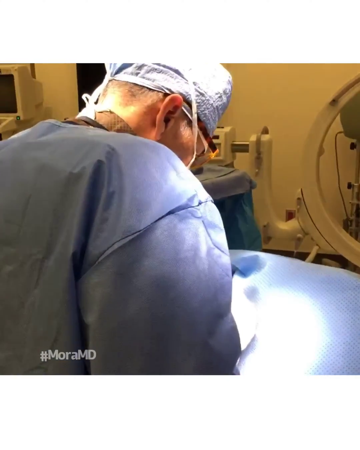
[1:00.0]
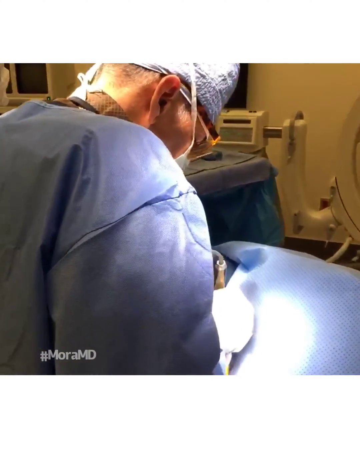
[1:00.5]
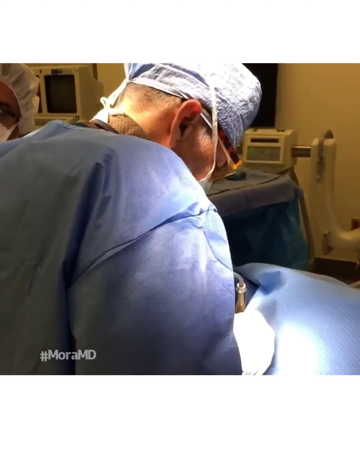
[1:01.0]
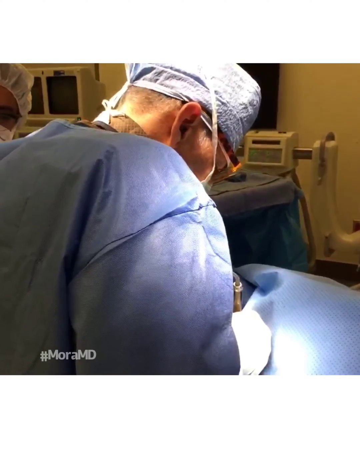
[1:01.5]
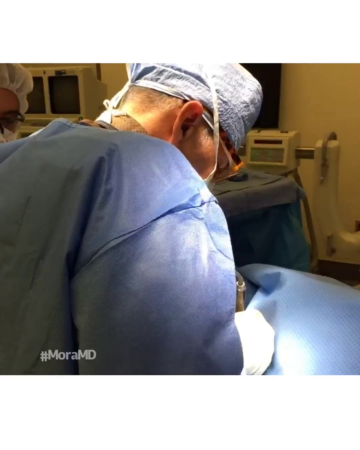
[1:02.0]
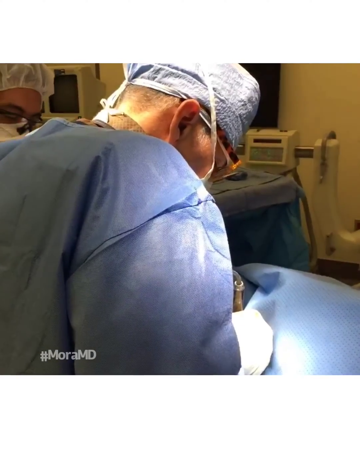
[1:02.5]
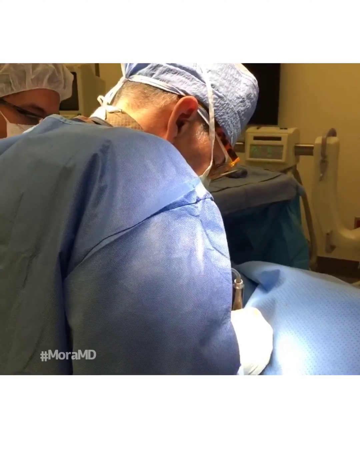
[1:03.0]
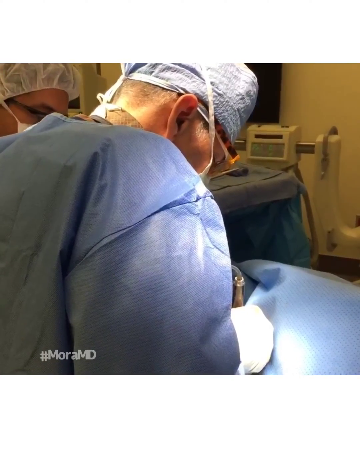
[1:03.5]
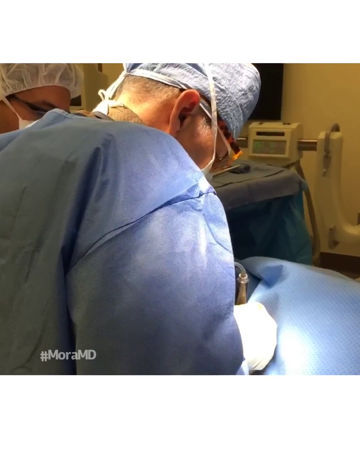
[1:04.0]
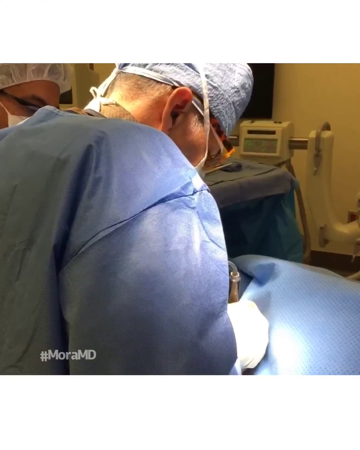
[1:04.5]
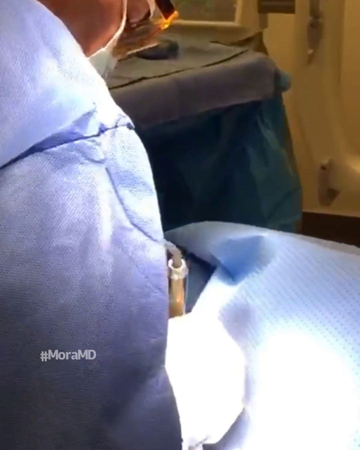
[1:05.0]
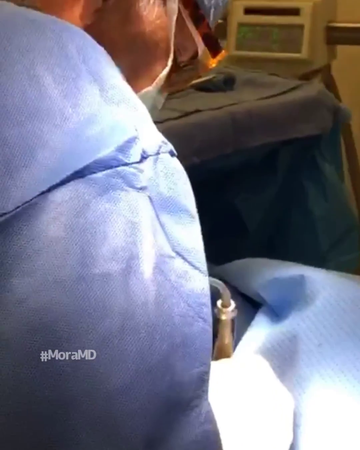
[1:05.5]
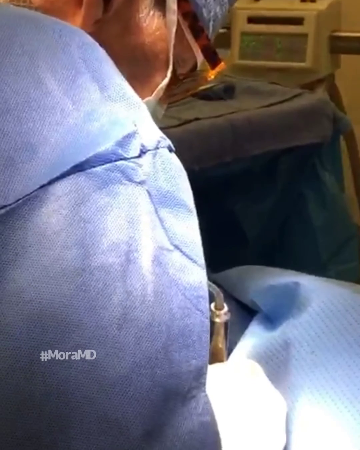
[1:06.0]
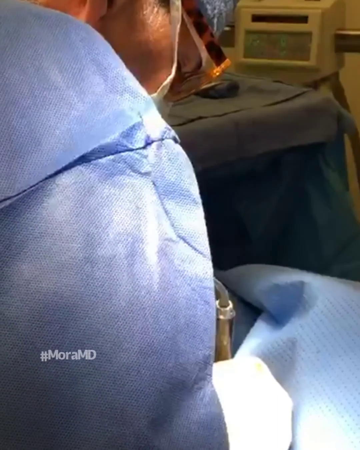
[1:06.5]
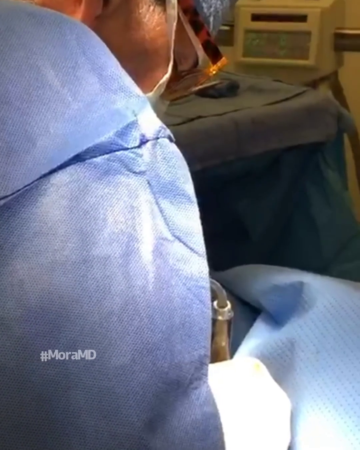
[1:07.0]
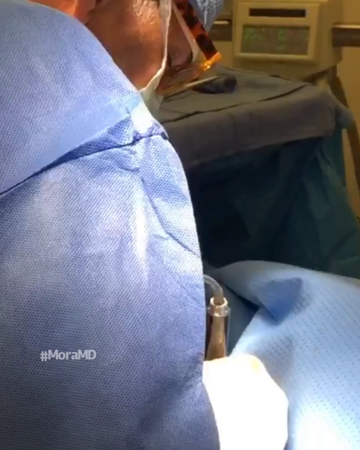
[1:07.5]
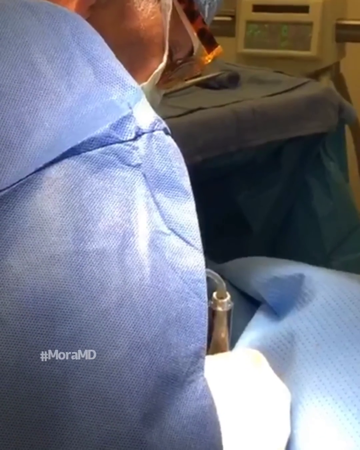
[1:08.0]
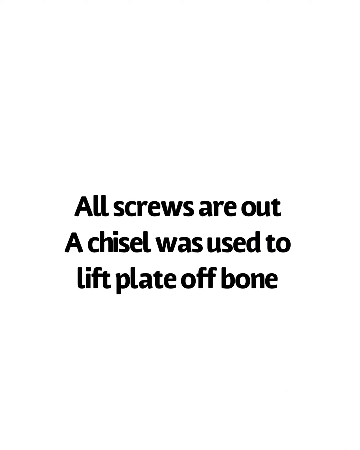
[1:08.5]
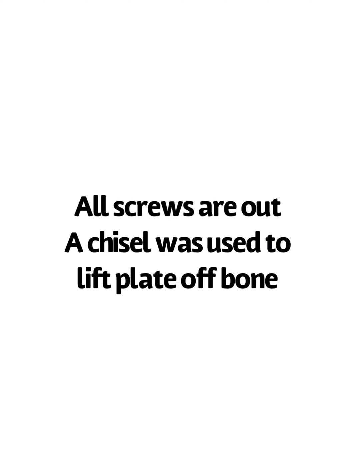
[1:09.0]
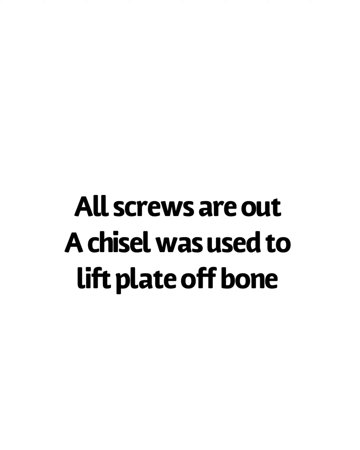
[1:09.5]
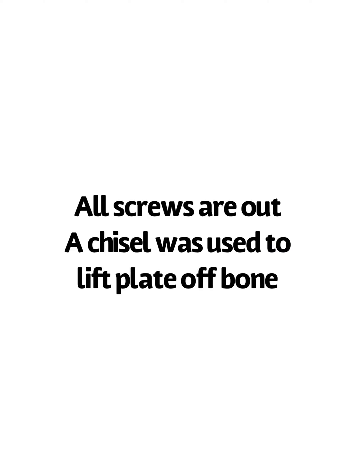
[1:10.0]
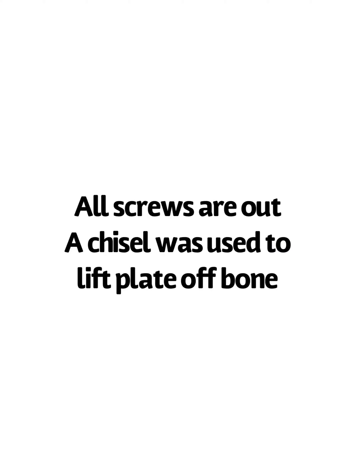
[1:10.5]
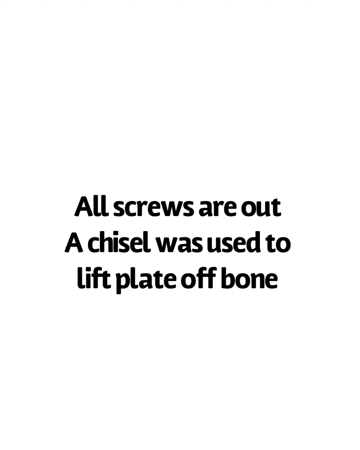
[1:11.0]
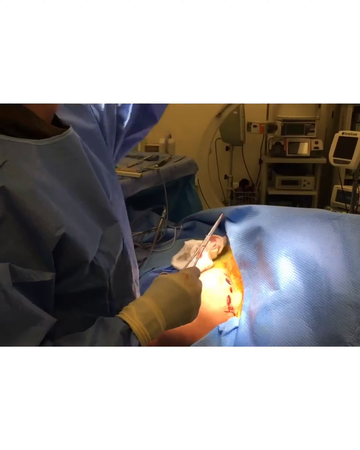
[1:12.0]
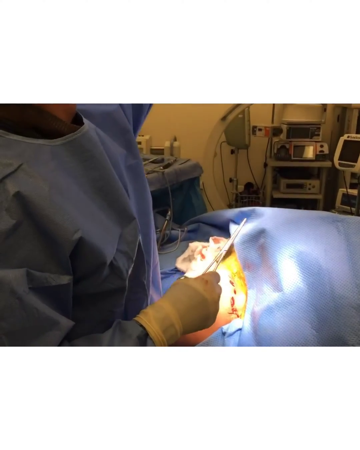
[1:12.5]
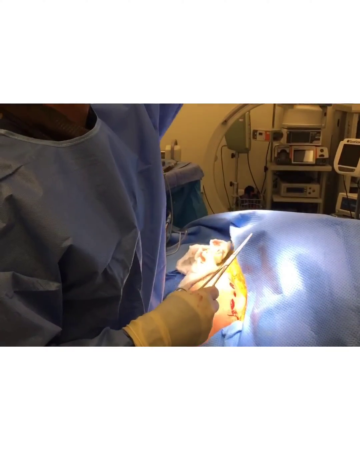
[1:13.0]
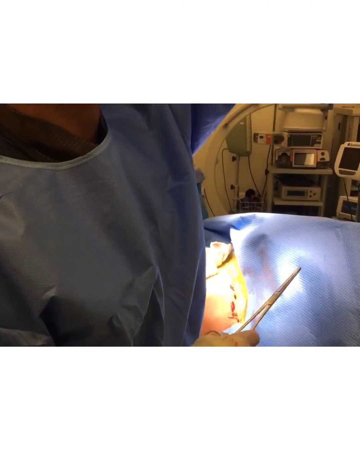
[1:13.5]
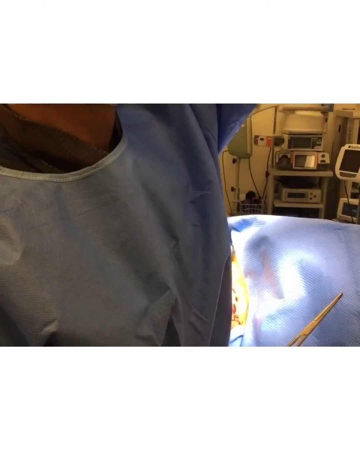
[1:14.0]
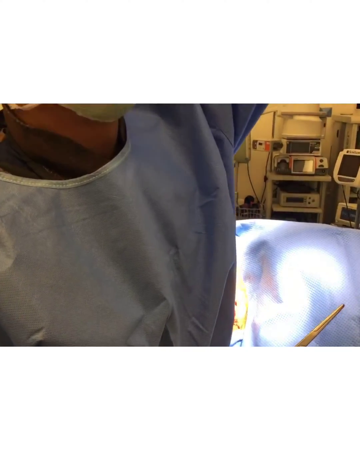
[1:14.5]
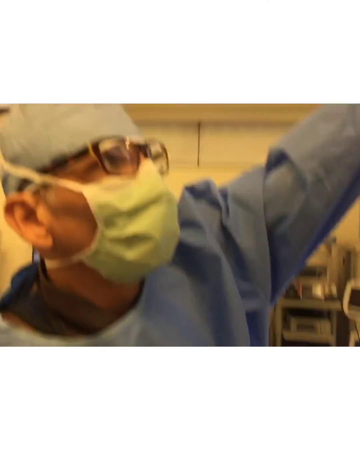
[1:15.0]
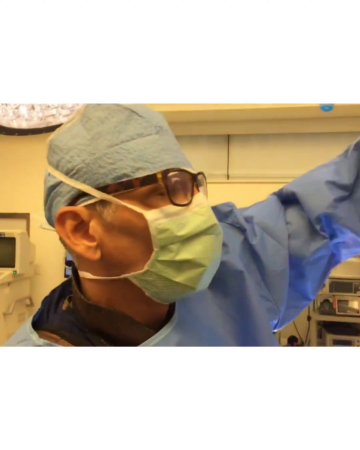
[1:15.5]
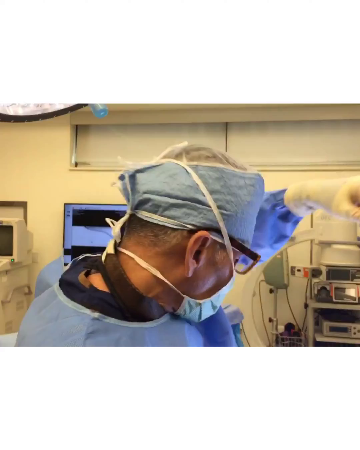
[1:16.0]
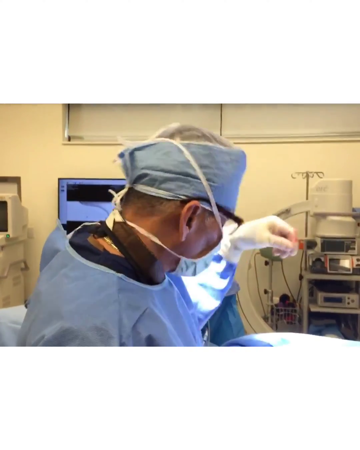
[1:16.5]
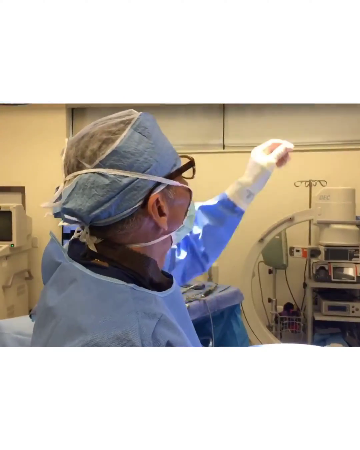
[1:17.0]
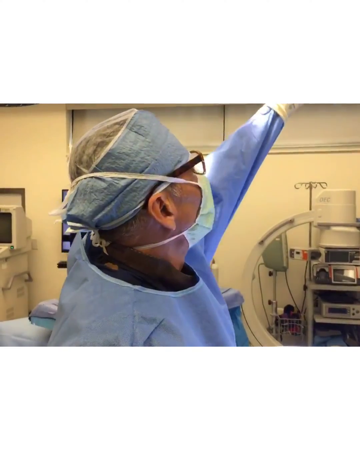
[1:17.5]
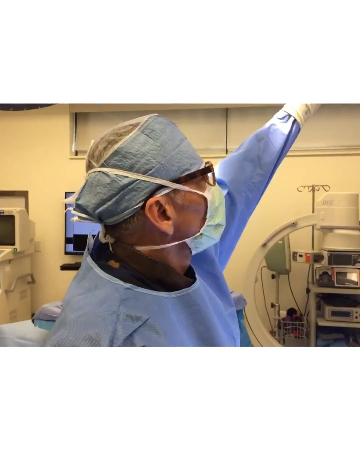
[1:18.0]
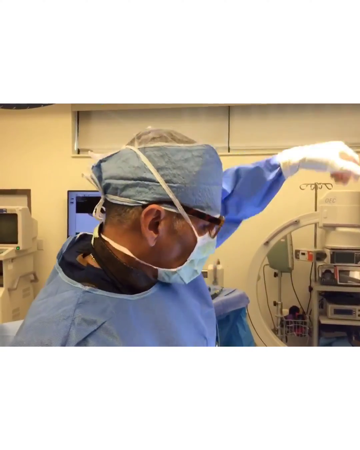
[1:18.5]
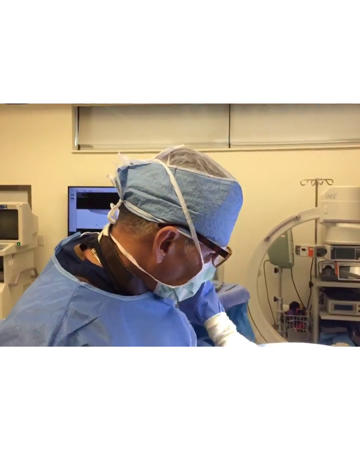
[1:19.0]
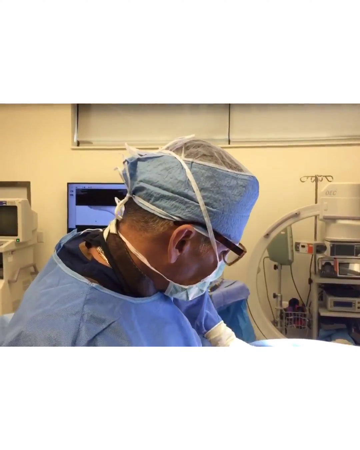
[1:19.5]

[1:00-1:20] In a surgical area, a doctor performs surgery on a patient on a surgery table. The doctor wears blue scrubs, a mask and a hair covering, and is leaned over the patient, who is covered with a blue sheet. Beyond the doctor in the room there is a screen for some sort of computer device, a table for a waste bin or used linen bin, and a device that looks round; only one round section of it is visible, attached to an arm that is attached to a spindle on another machine in the room. A person assisting the doctor wears a hairnet, glasses and a mask. A closer shot shows the doctor over the patient holding a surgical tool in his right gloved hand. Black text on a white background reads "All screws are out. A chisel was used to lift plate off bone." Back in the surgery room, the doctor holds what appears to be a pair of scissors or clamps that resemble scissors. The patient's skin is visible, with the blue sheet covering the patient and white gauze on the patient's body. The camera tilts up to the doctor reaching for something above his head.